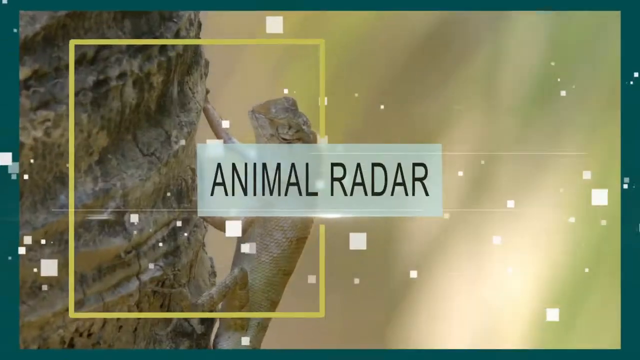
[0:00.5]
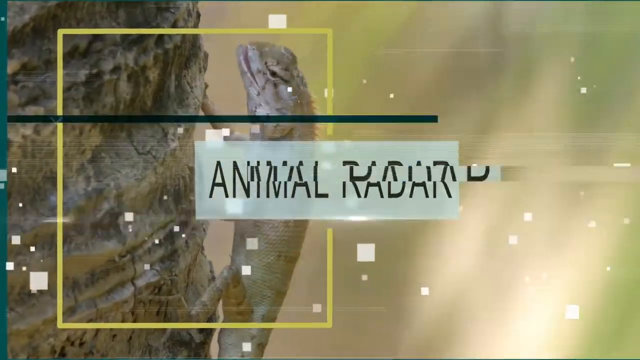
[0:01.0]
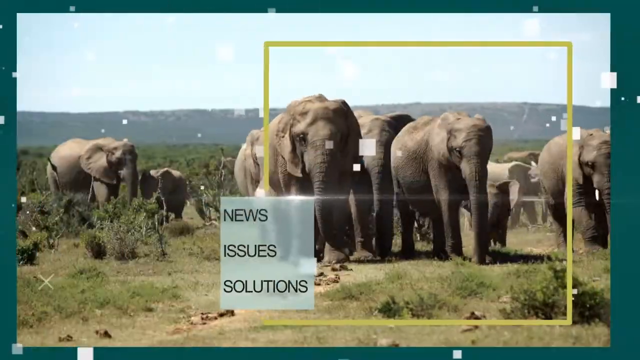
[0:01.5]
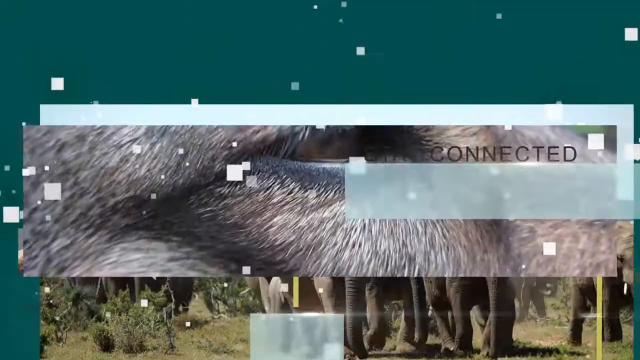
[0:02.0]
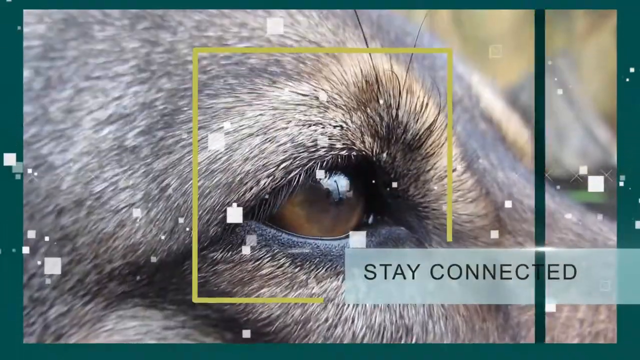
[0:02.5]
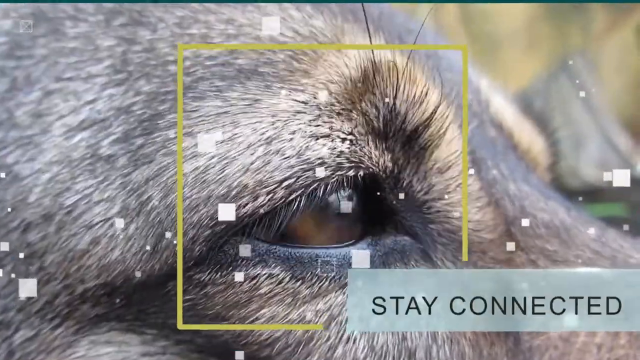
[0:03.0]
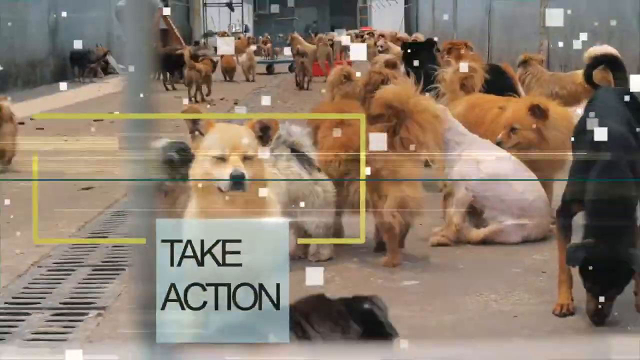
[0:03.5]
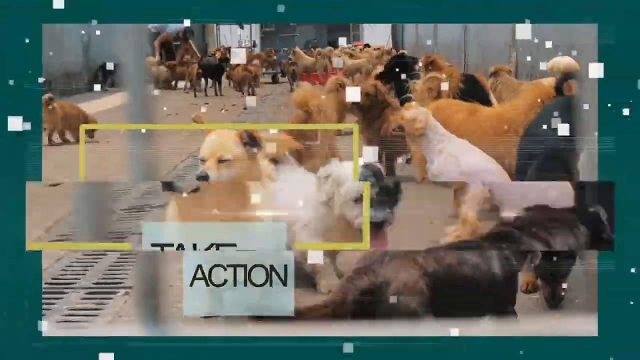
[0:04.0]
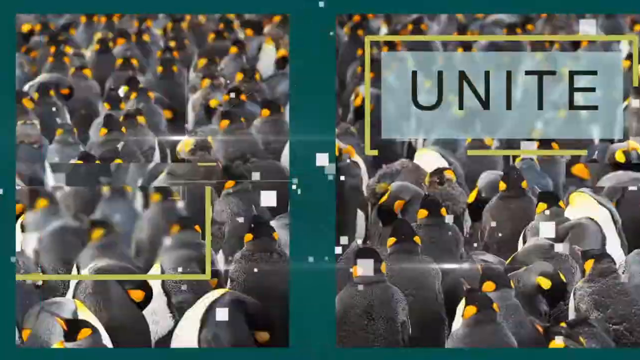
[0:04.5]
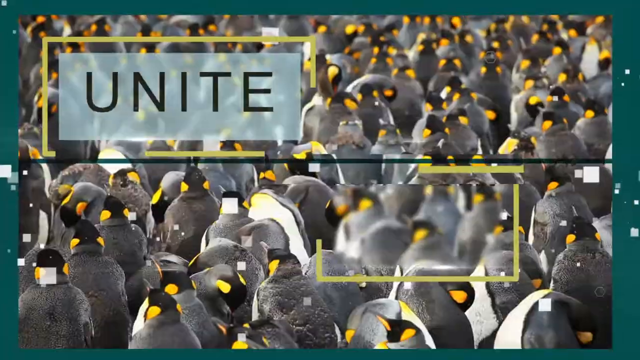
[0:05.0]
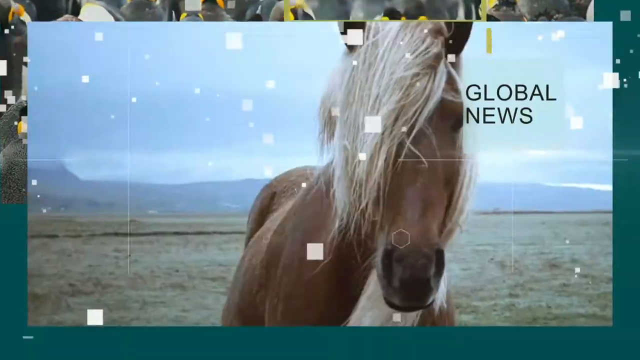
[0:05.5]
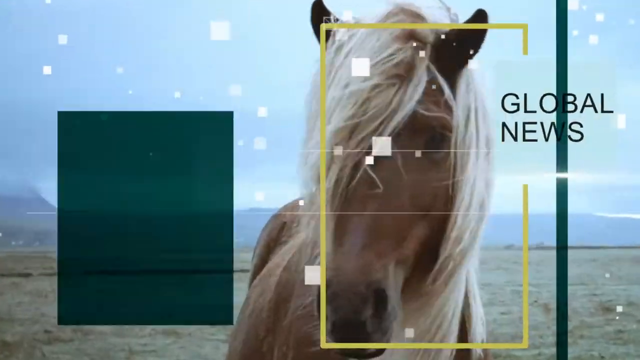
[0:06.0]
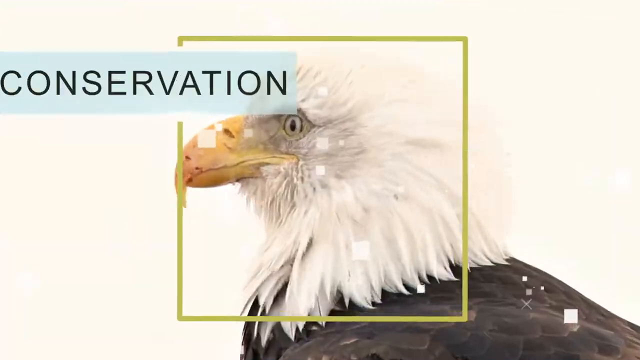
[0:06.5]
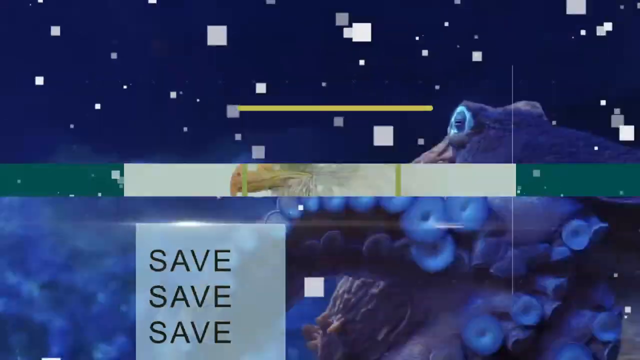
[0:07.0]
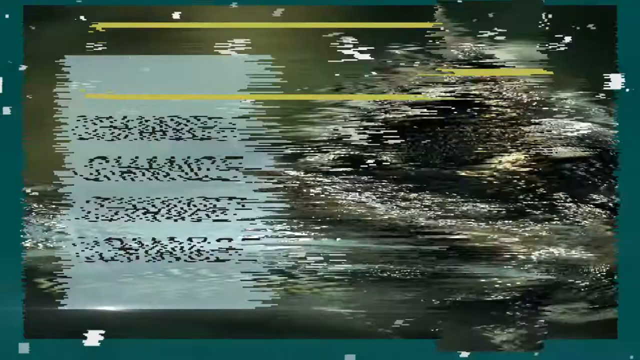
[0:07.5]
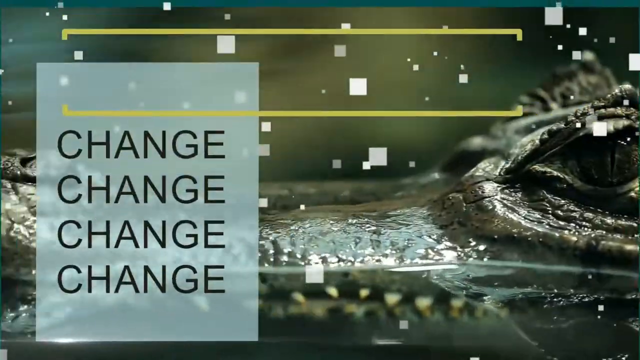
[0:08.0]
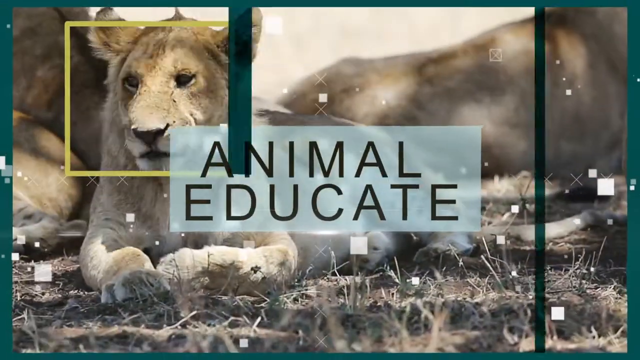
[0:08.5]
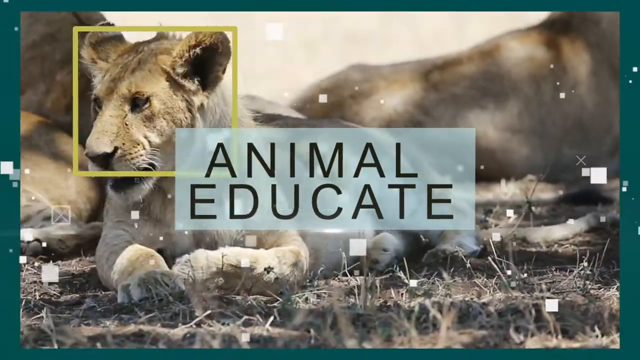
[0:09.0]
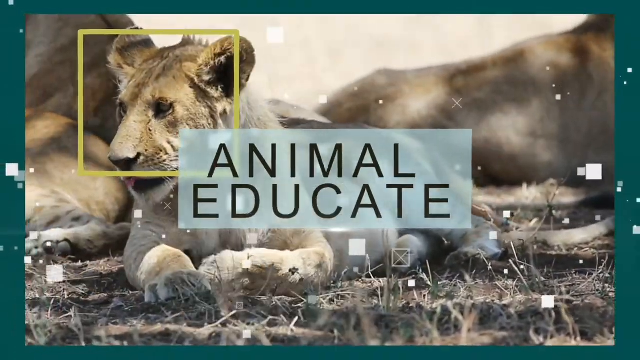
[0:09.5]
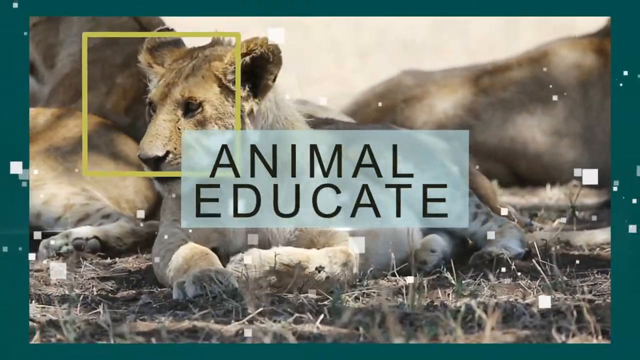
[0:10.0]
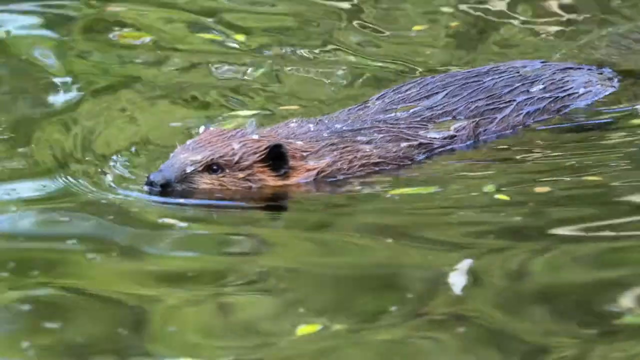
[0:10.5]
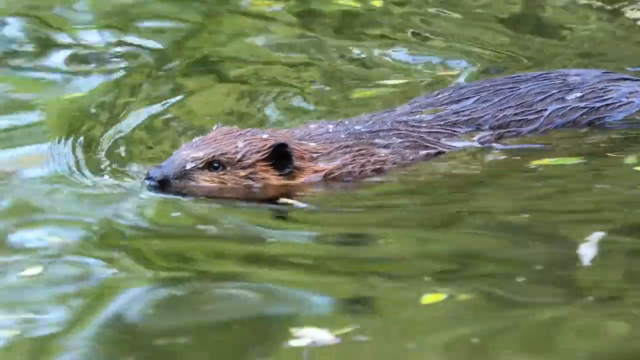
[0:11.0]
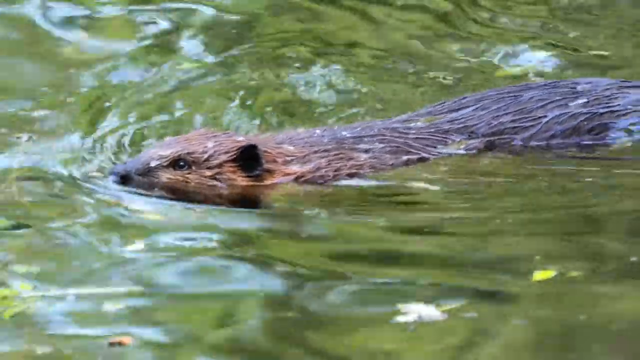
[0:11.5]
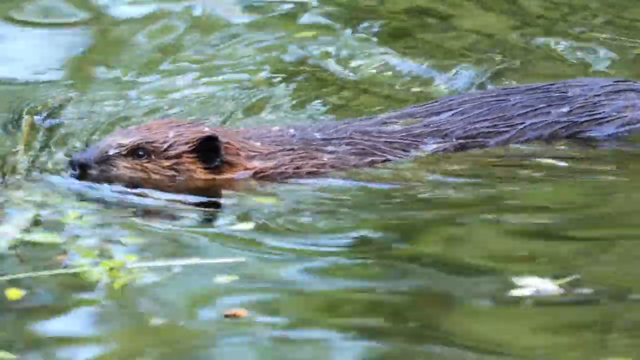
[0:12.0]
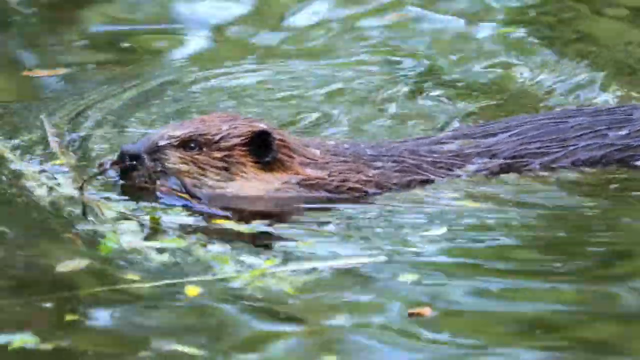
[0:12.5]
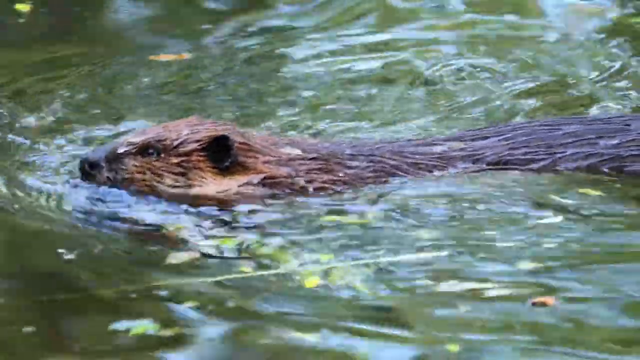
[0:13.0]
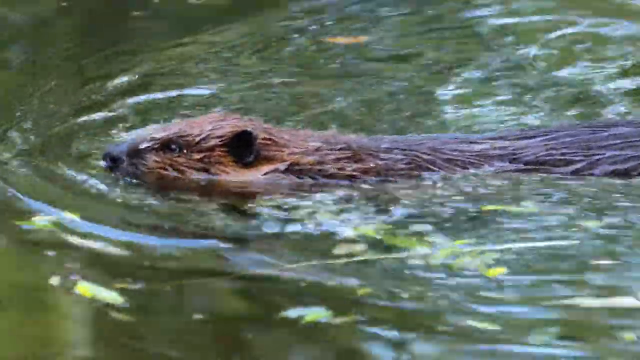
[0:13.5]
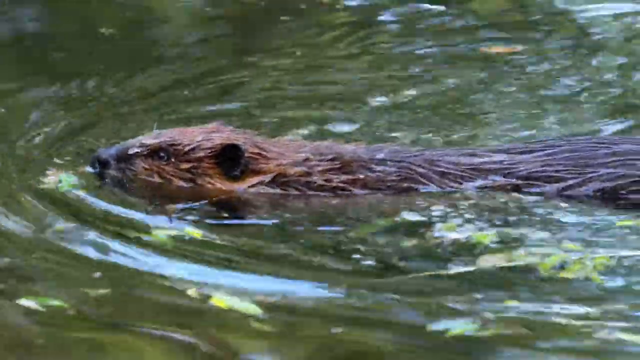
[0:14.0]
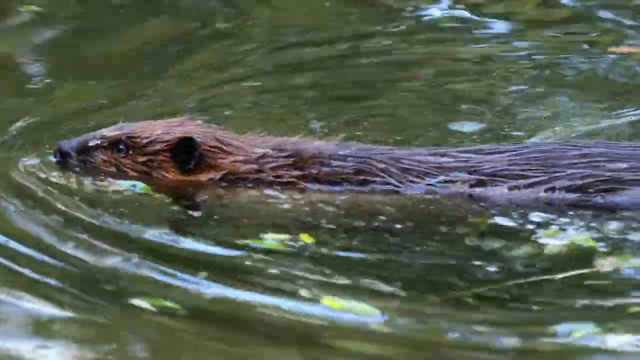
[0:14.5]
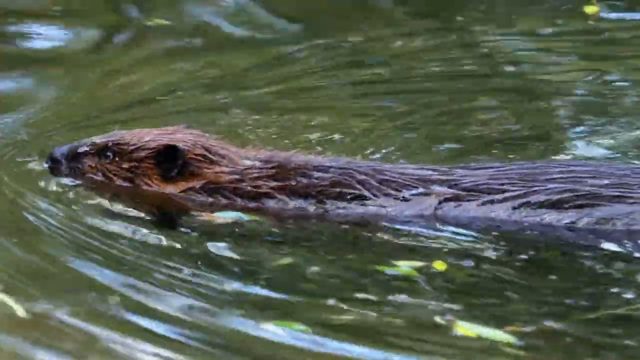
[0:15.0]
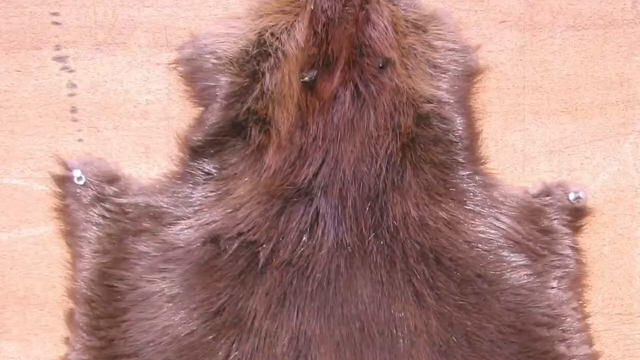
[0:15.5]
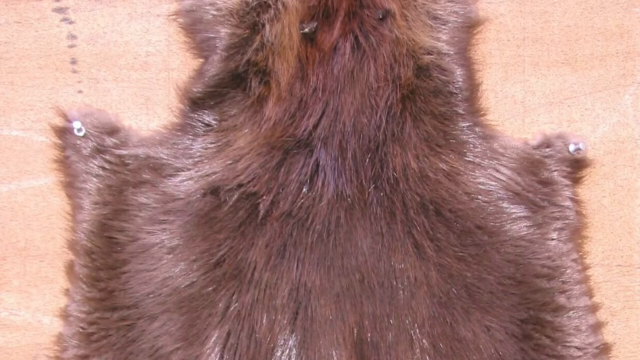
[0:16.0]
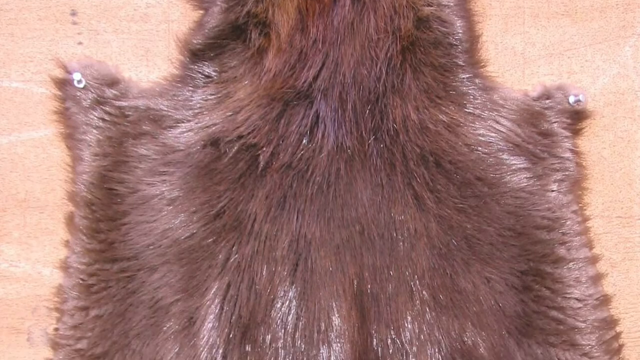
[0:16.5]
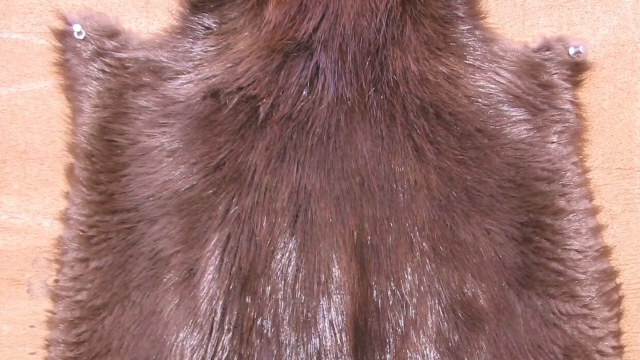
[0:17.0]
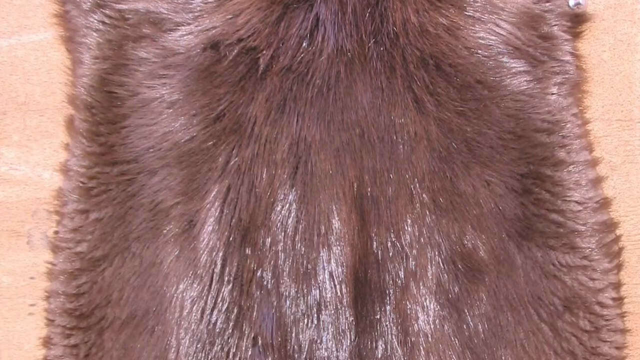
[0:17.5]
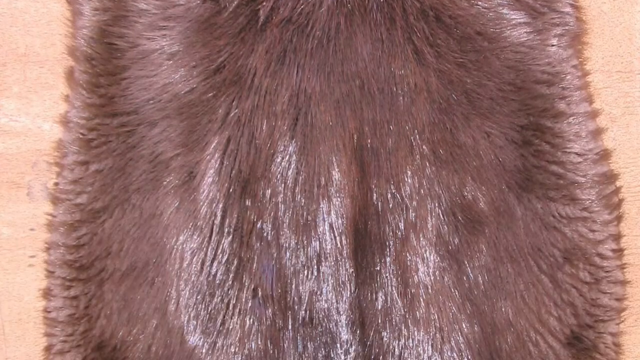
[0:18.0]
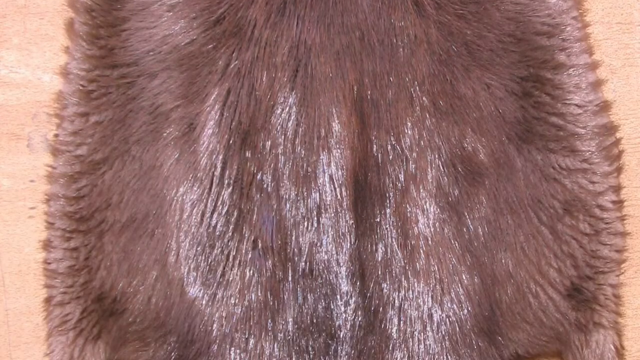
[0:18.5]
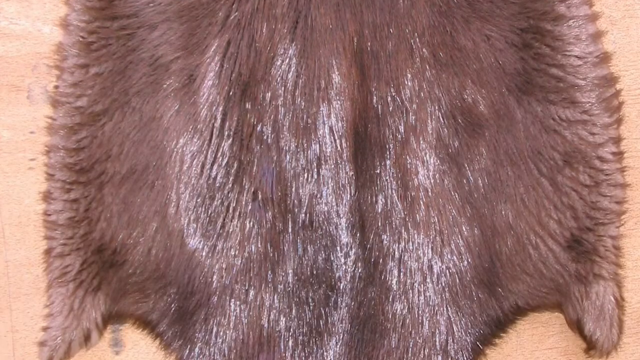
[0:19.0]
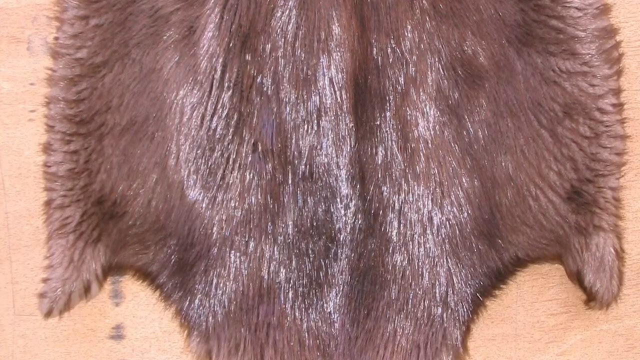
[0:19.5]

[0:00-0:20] A black background transitions to a teal background, and the view zooms in on a rectangle in the middle with black lettering that says "animal radar". A lizard climbs a tree in a vertical position, with a yellow square around it. The scene changes to a herd of elephants of a variety of sizes, with the words "news, issues, and solutions". The video zooms in on the eye of a creature, with "stay connected". Next, many dogs are inside a building, and the words say "take action". A large number of penguins are huddled together as the screen says "unite". A close-up shot shows a wild horse with the words "global news". A close-up zooms in on the head, eye, and beak of a bald eagle, with the word "conservation". A night shot shows an octopus underwater with "save, save, save", followed by the eyes and top of the snout of an alligator out of the water with "change, change, change, change". A lioness lies on the ground looking at the camera while the screen says "Animal Educate". An otter swims in water, and then the pelt of a beaver is shown.